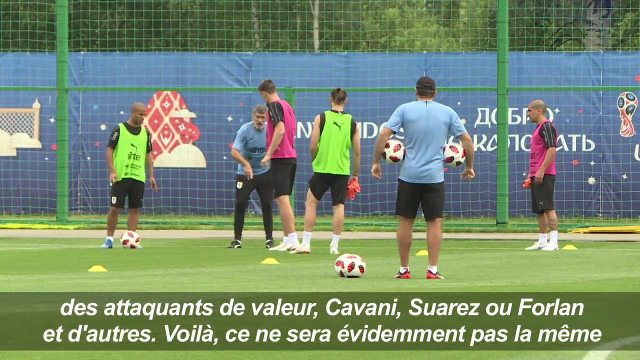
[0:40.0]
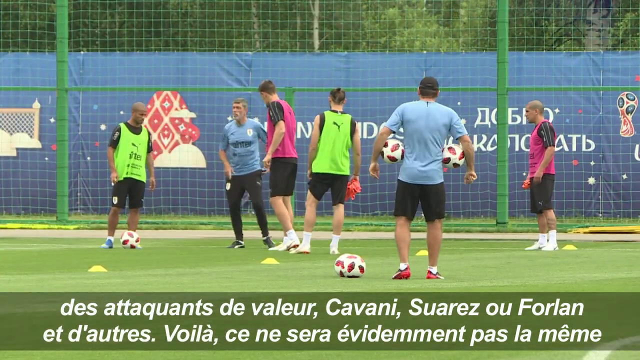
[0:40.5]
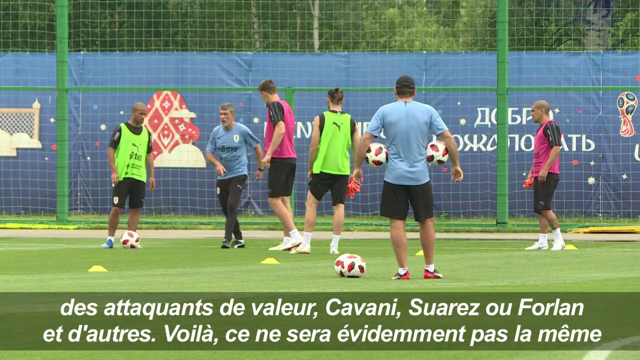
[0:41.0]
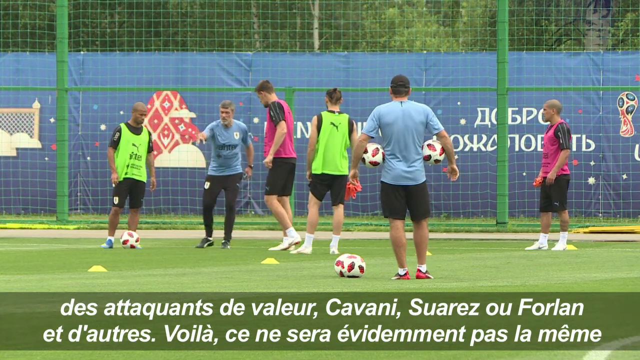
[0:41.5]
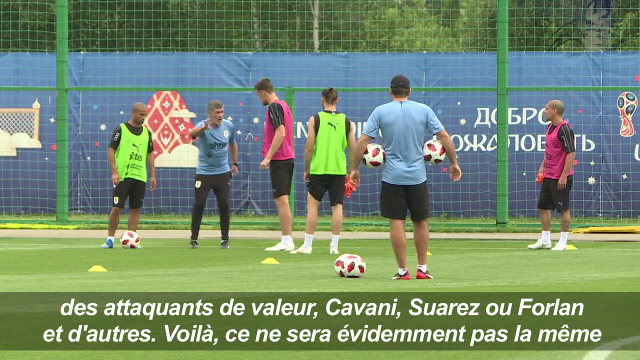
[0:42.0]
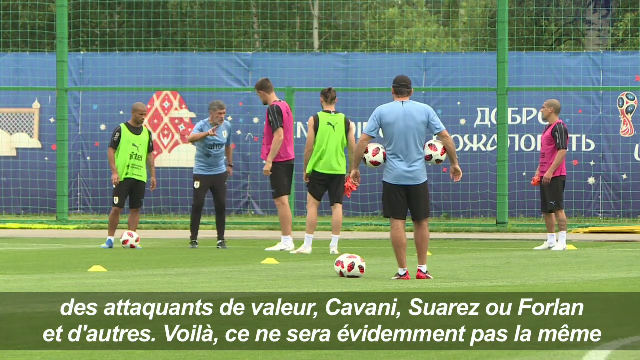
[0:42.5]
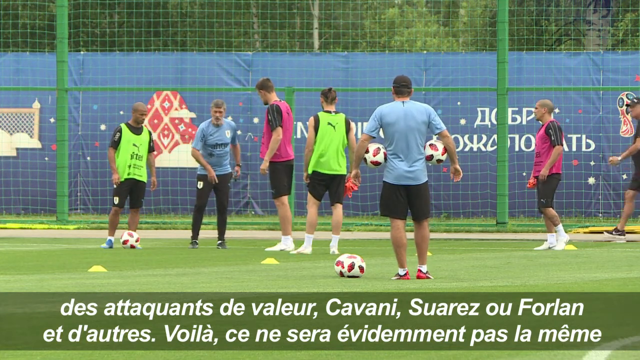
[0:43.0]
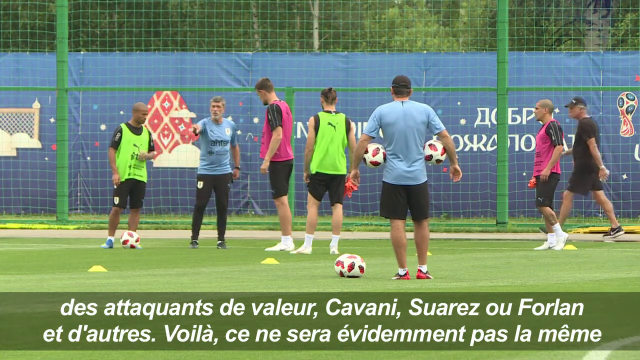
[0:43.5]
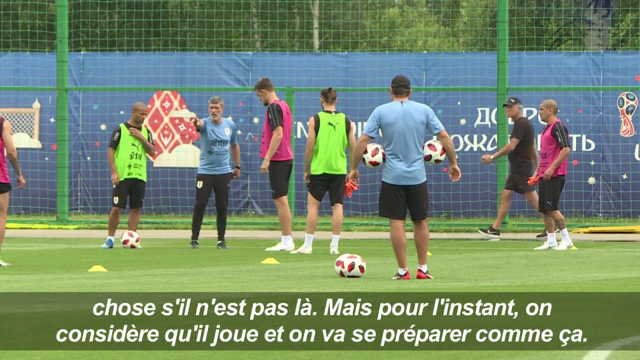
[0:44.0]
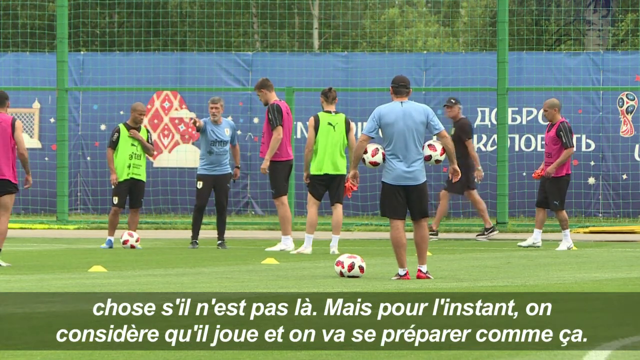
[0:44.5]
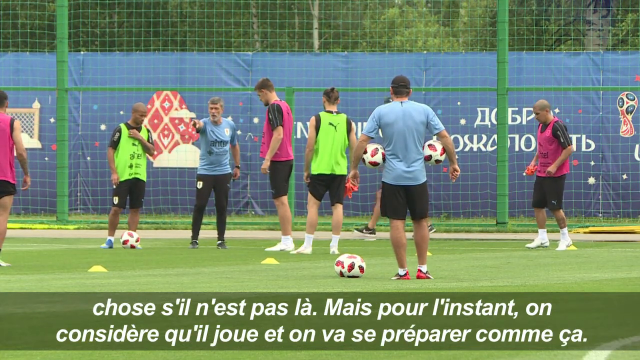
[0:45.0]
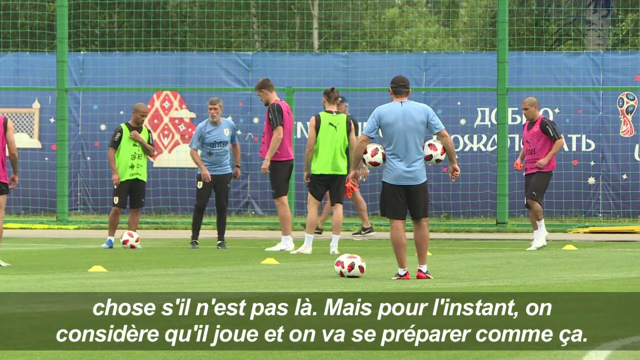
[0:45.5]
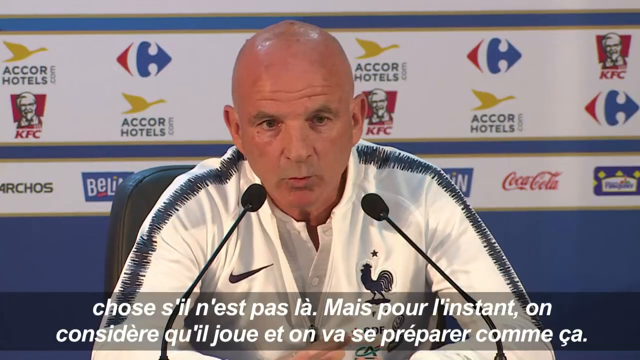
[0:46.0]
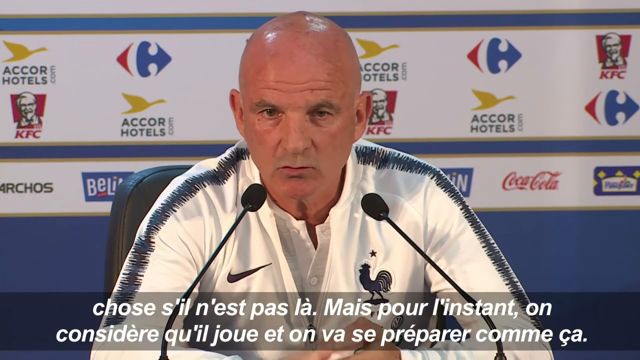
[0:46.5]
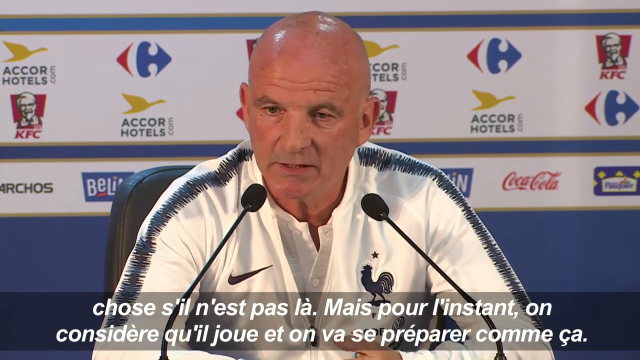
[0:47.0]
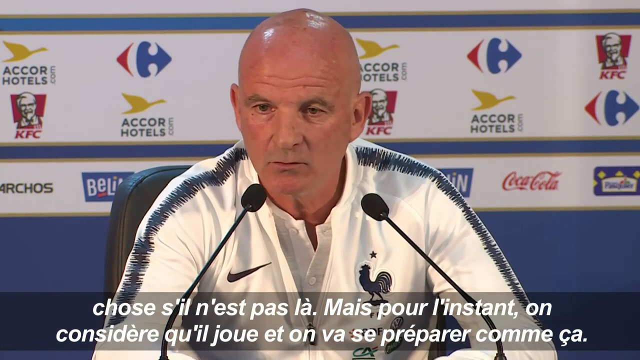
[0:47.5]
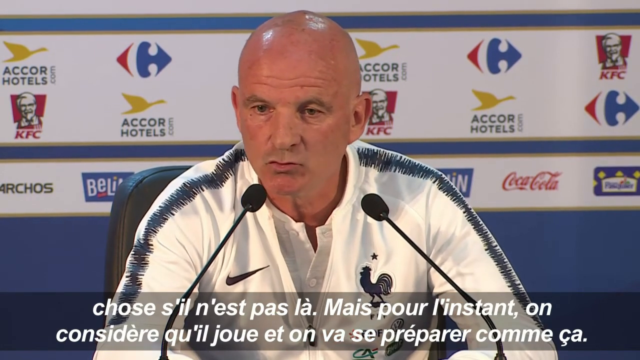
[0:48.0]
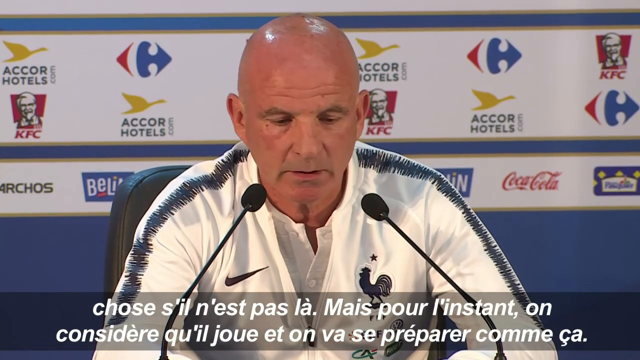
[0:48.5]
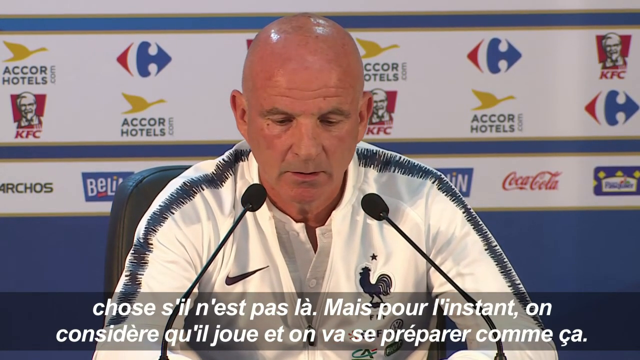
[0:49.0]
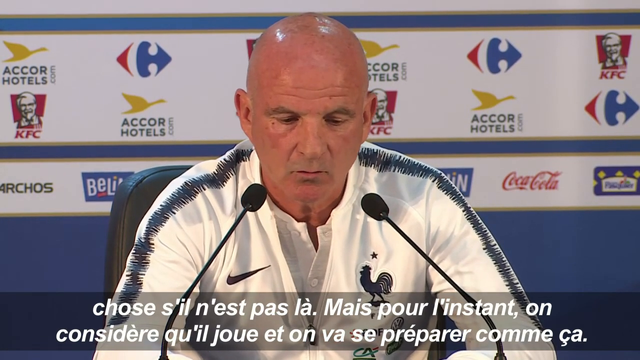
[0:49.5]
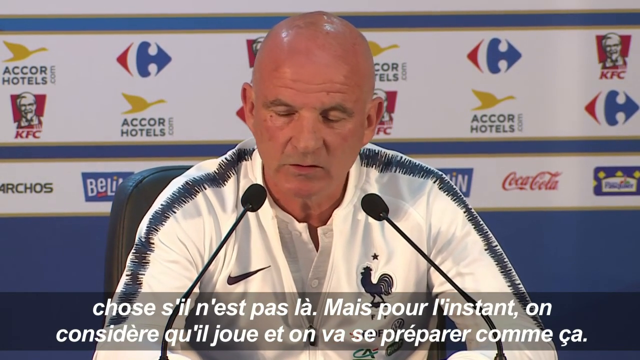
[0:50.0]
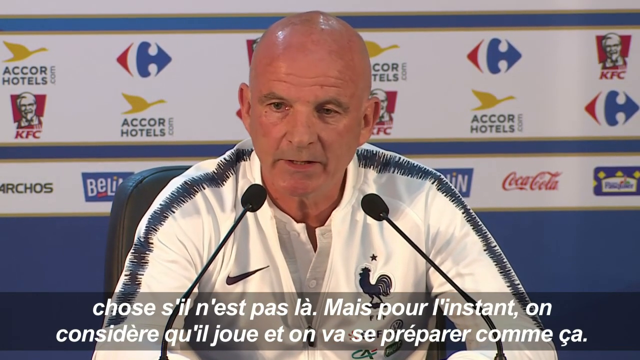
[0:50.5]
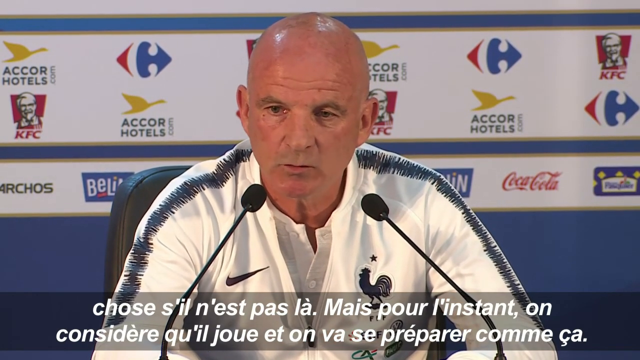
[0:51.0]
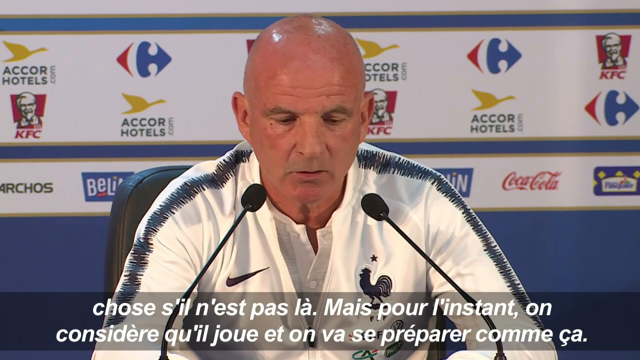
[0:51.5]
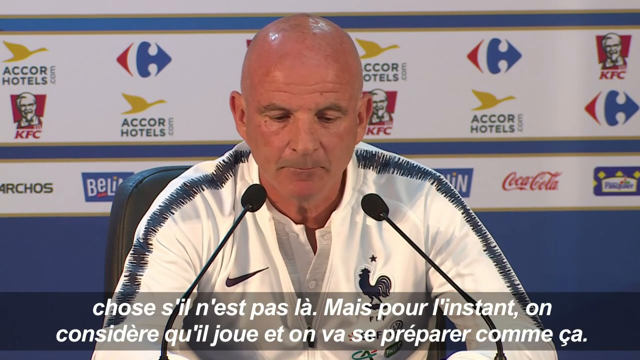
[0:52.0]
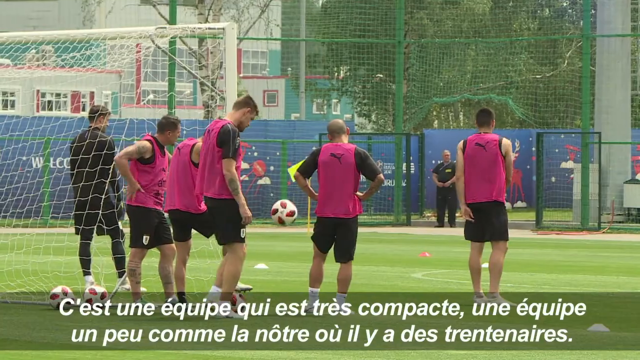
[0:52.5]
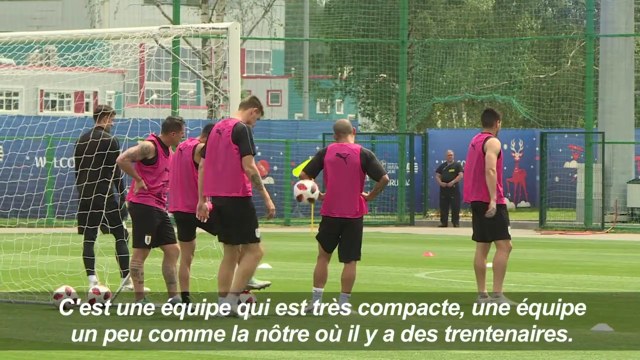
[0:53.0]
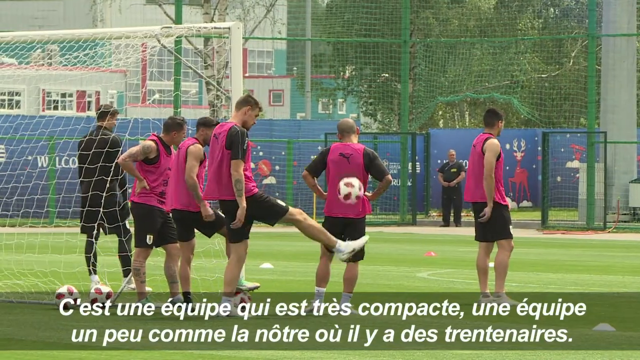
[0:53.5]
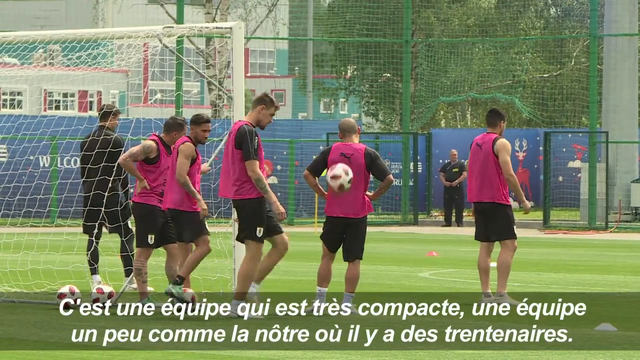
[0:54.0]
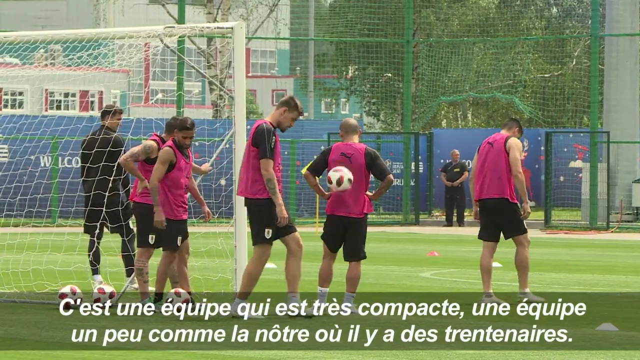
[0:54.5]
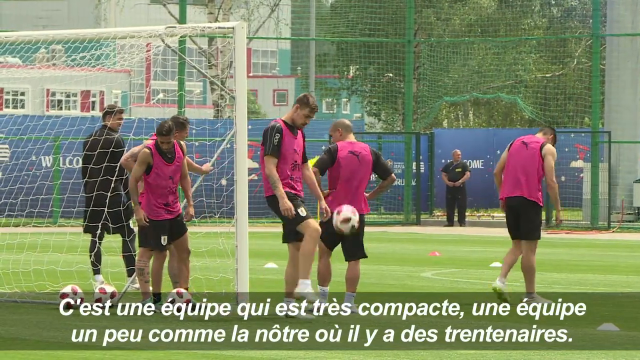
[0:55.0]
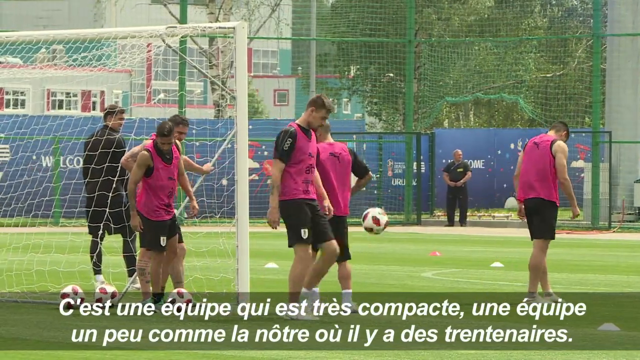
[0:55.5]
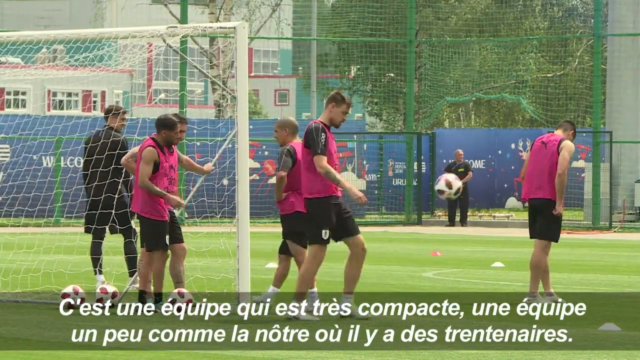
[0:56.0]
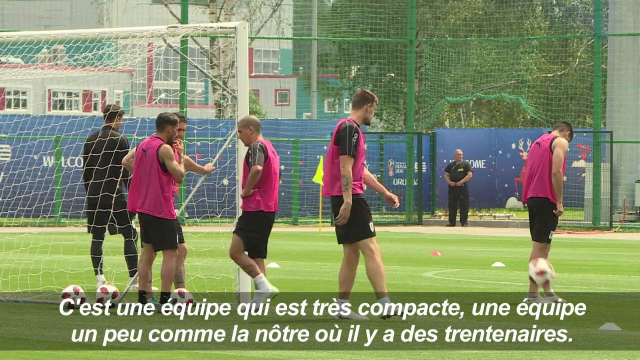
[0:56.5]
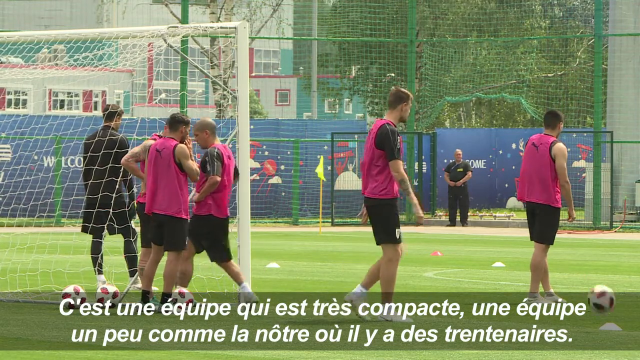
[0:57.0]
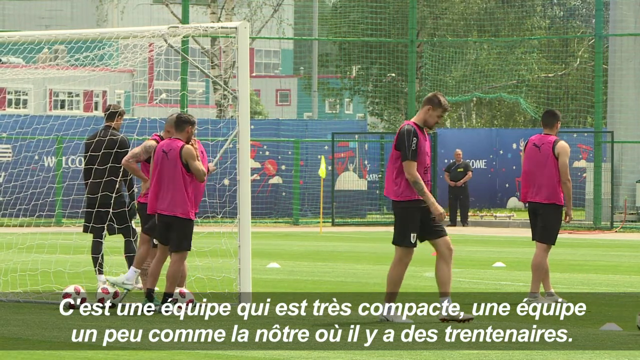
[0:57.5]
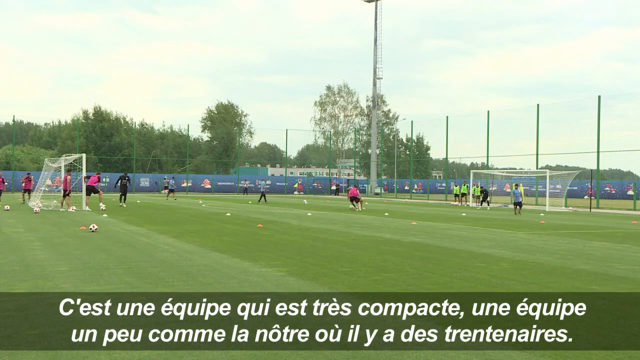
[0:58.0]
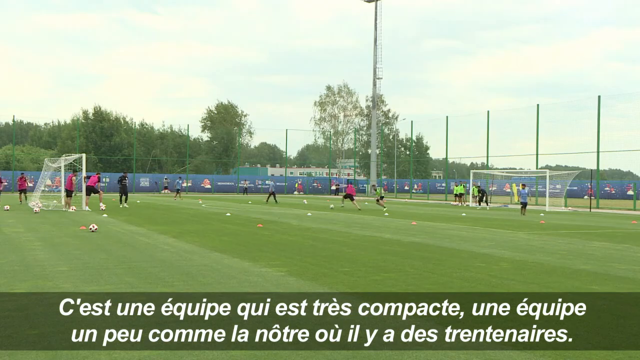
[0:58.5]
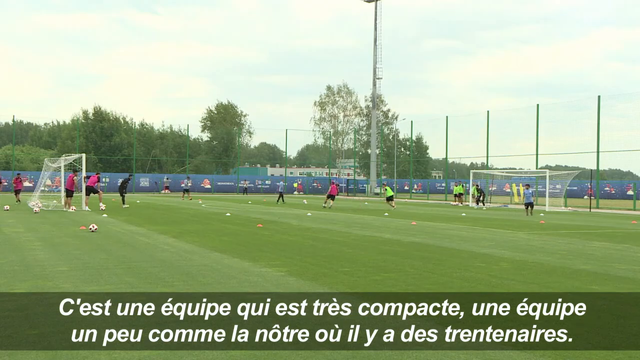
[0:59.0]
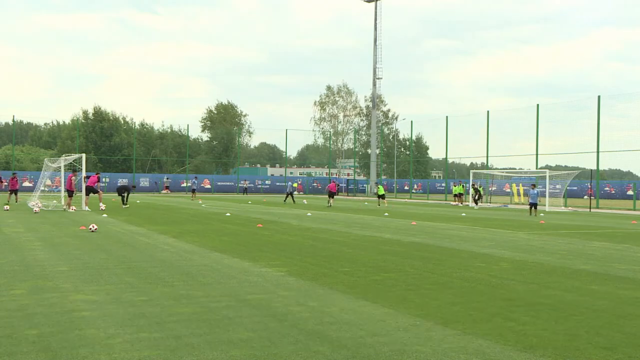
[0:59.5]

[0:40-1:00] On the training pitch, a football player in a coloured tabard stands static. More in the foreground, a man in a blue t-shirt has his back to the camera, holding two footballs between his arms and his waist, with a football down to his left on the pitch. On the left of the screen, facing the camera, another man in a blue shirt appears to be giving instructions to the men, who are looking at him as he points to the bottom left of the screen. The video cuts back to the press conference and a head-and-shoulders shot of the bald man, seated at the table and continuing to talk while looking slightly to his left, seen from slightly above. Another shot of the training pitch shows a group of five men in black shorts and purple tabards standing to the right-hand side of the back of a goal. The man in the middle is doing keepy-uppies but loses control as the ball goes out in front of him. A static wide shot of the pitch then shows two goals: the permanent goal in front of the green netted fencing and a temporary one facing it, set up halfway up the pitch, with the players in their tabards running between them.